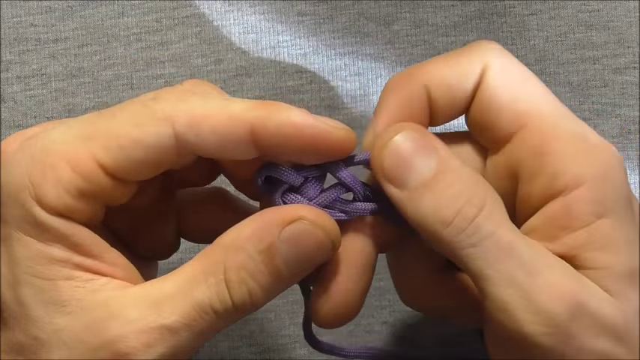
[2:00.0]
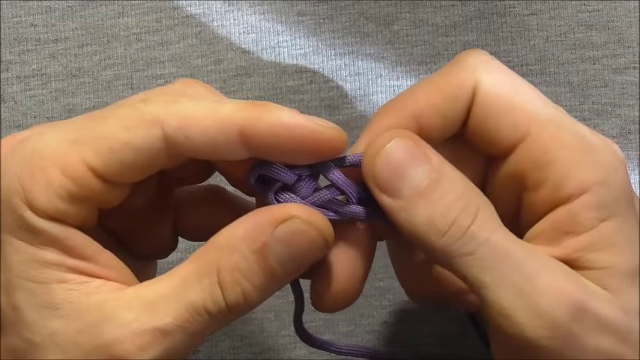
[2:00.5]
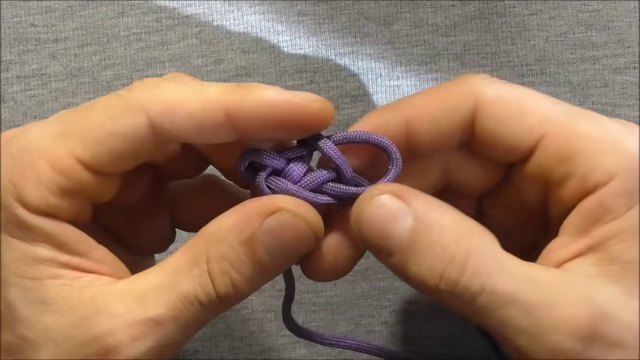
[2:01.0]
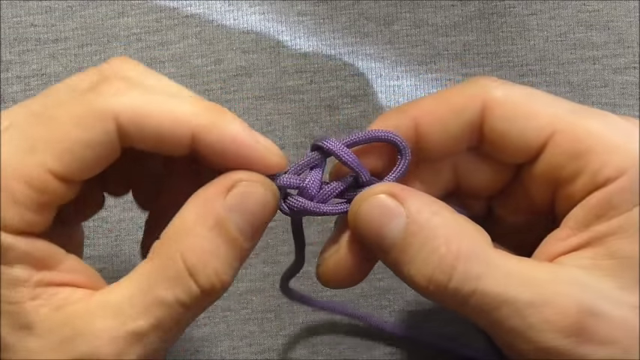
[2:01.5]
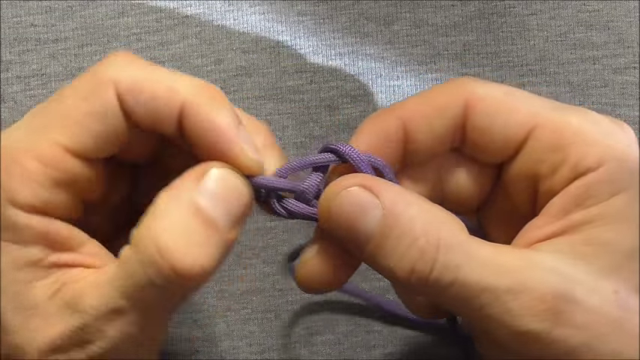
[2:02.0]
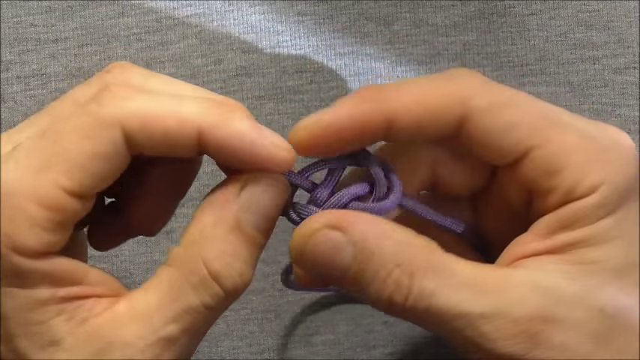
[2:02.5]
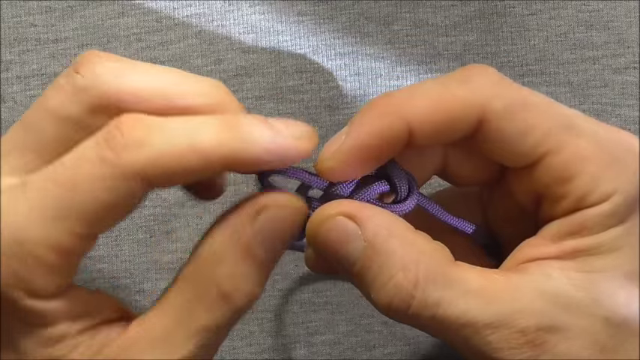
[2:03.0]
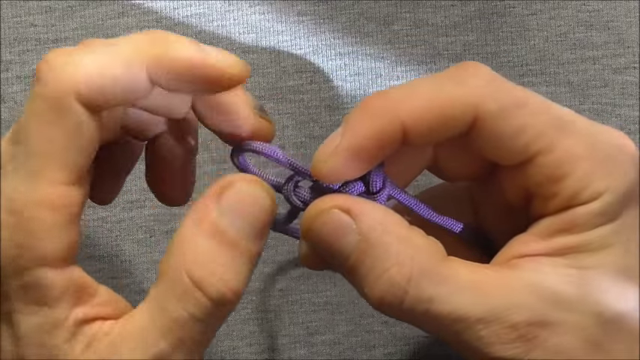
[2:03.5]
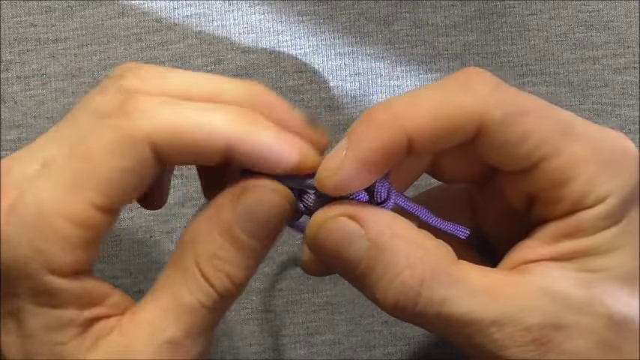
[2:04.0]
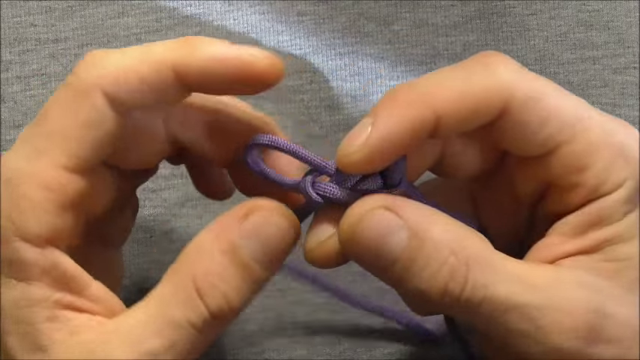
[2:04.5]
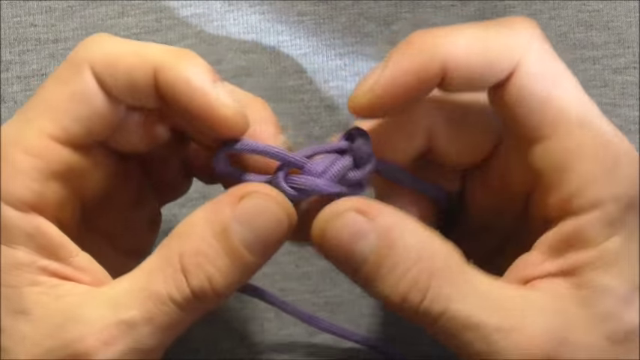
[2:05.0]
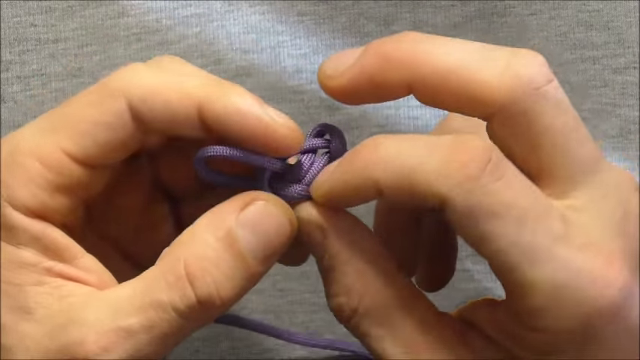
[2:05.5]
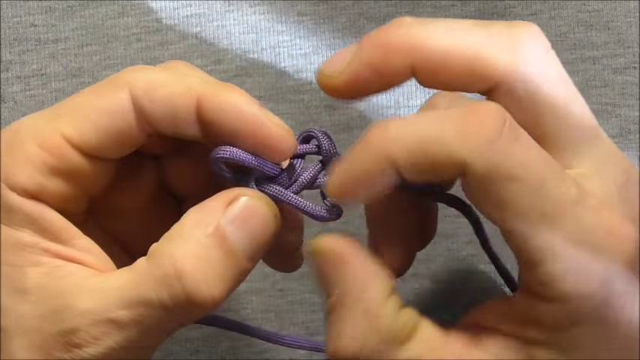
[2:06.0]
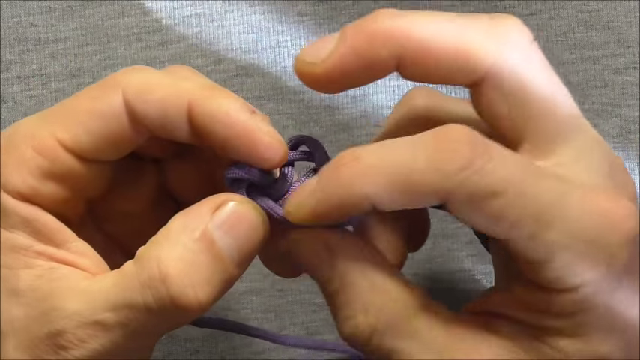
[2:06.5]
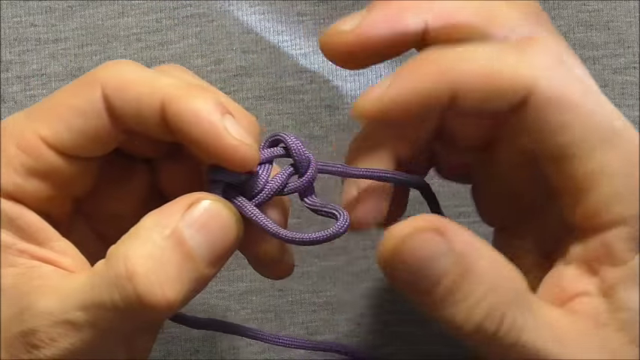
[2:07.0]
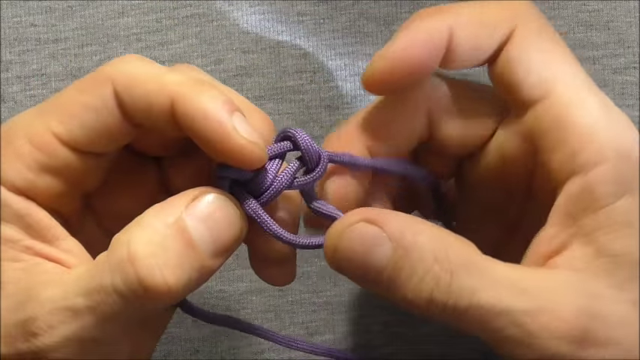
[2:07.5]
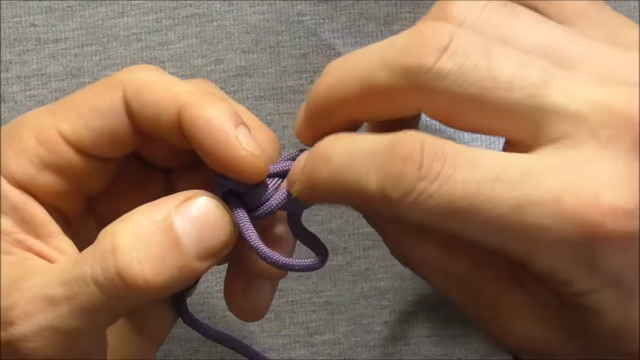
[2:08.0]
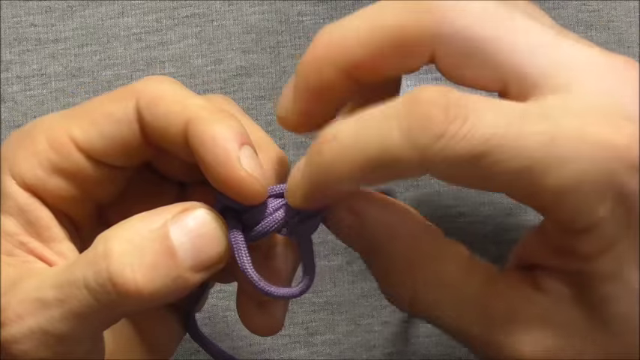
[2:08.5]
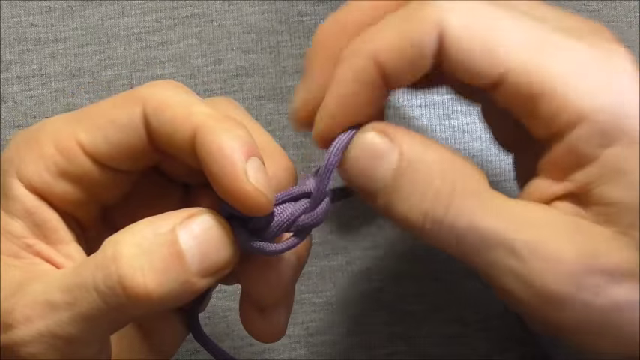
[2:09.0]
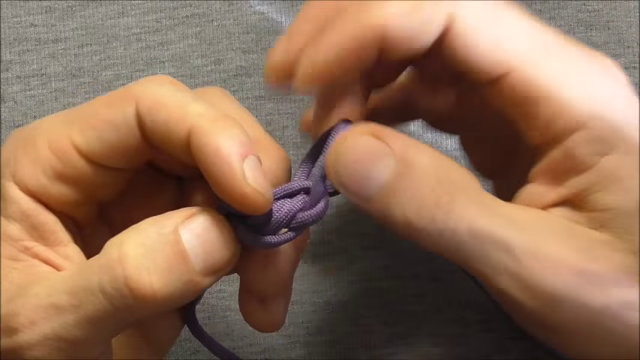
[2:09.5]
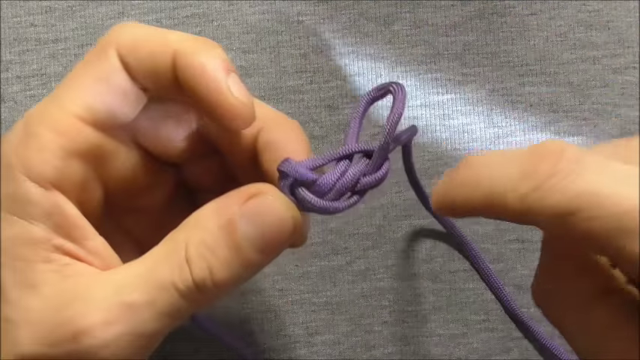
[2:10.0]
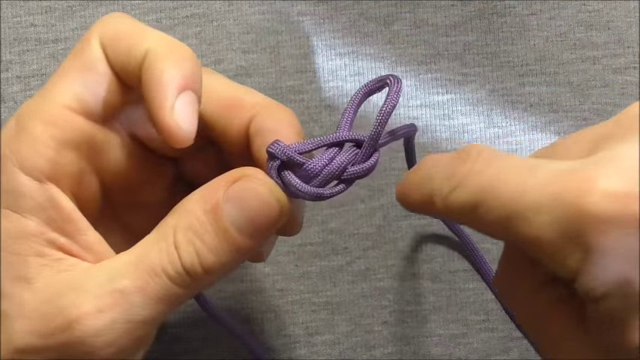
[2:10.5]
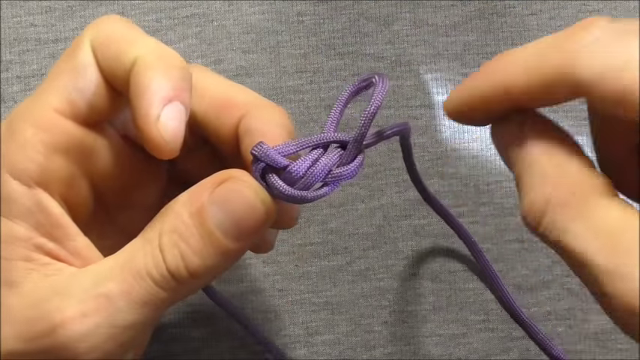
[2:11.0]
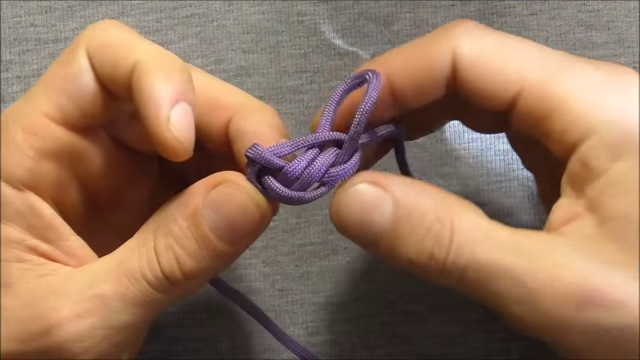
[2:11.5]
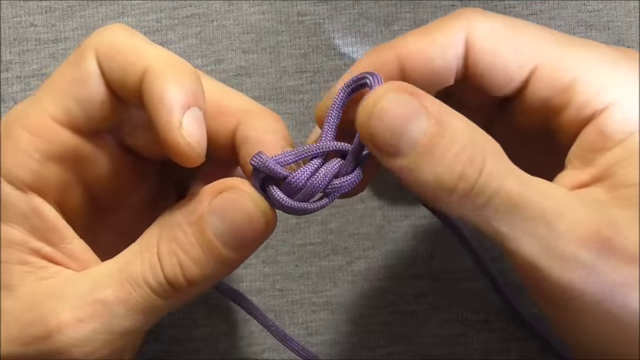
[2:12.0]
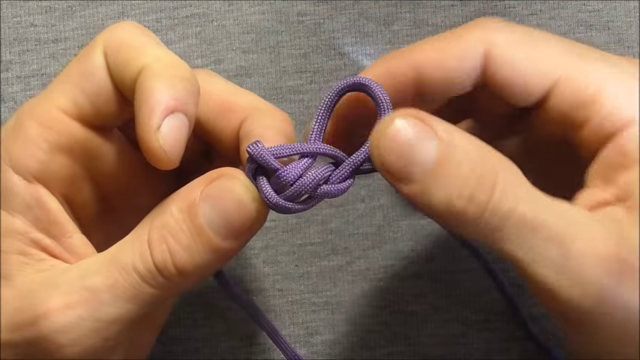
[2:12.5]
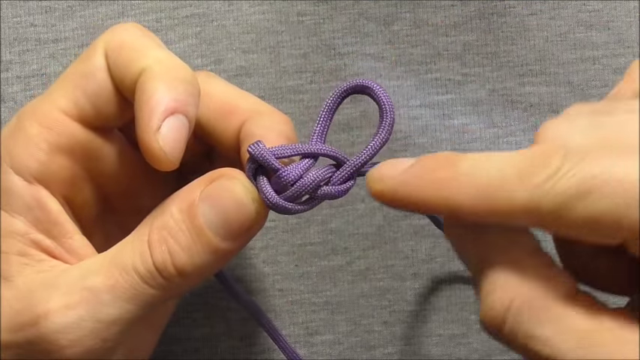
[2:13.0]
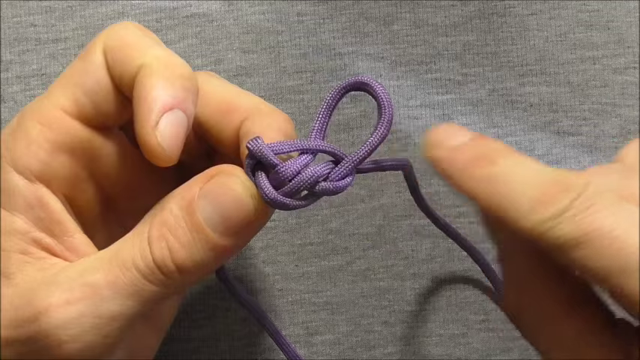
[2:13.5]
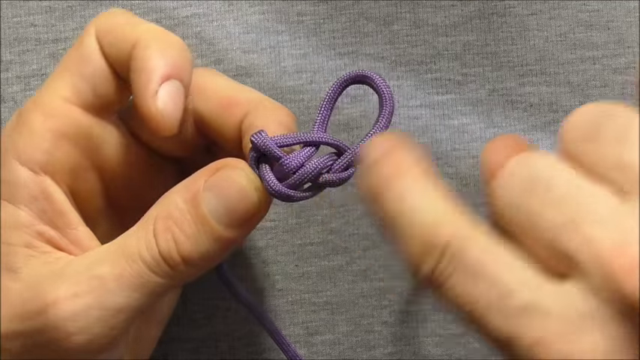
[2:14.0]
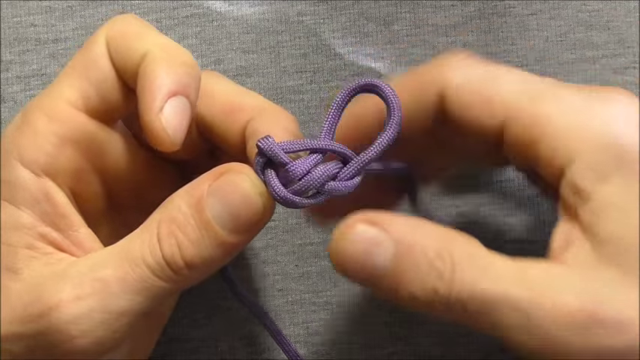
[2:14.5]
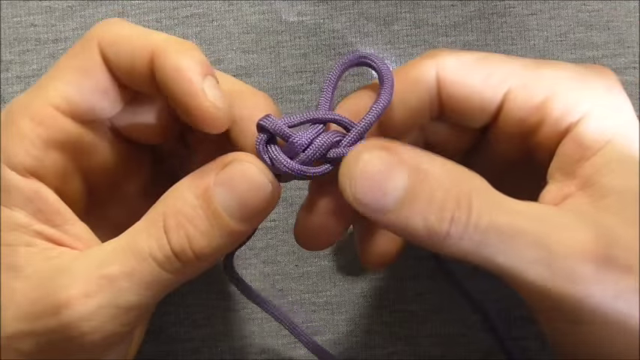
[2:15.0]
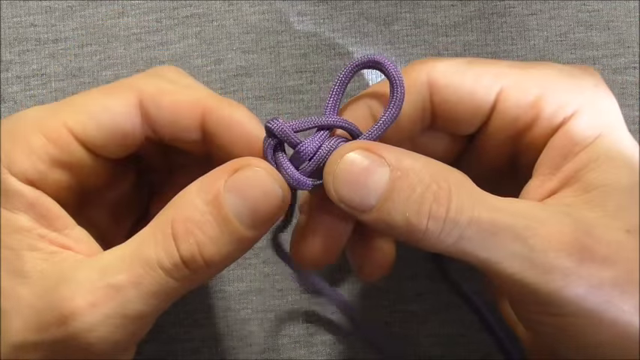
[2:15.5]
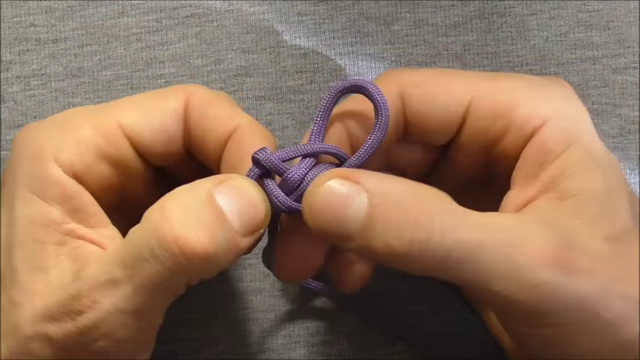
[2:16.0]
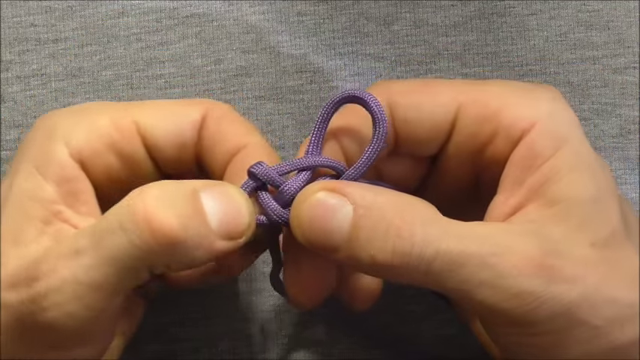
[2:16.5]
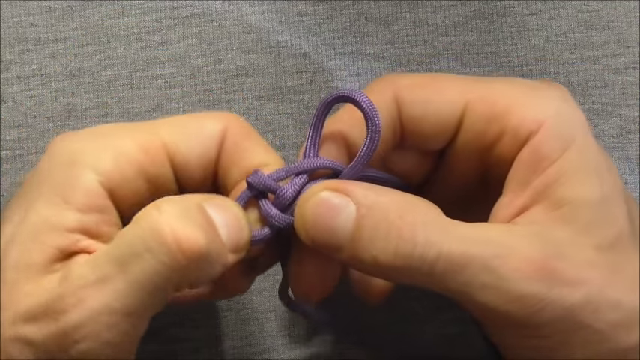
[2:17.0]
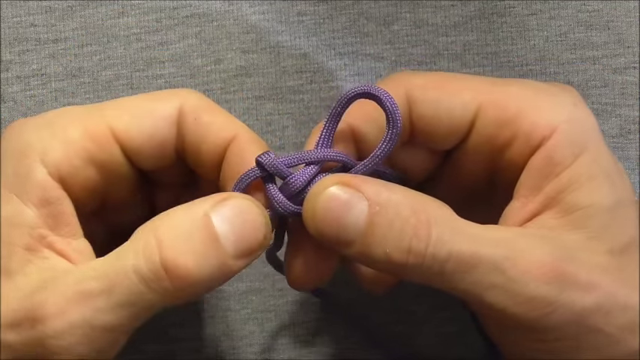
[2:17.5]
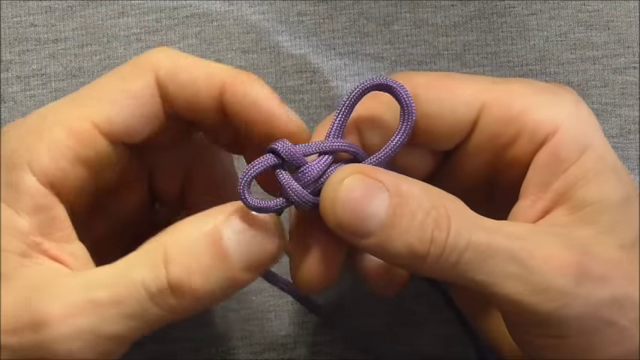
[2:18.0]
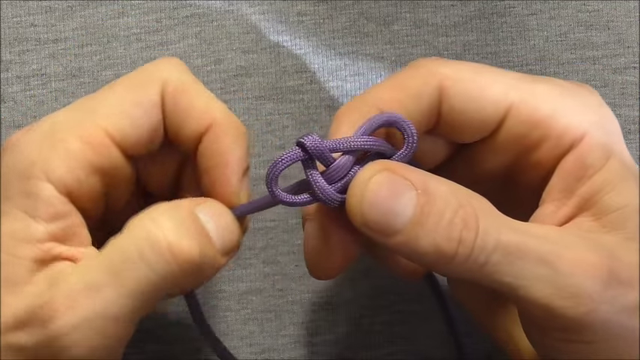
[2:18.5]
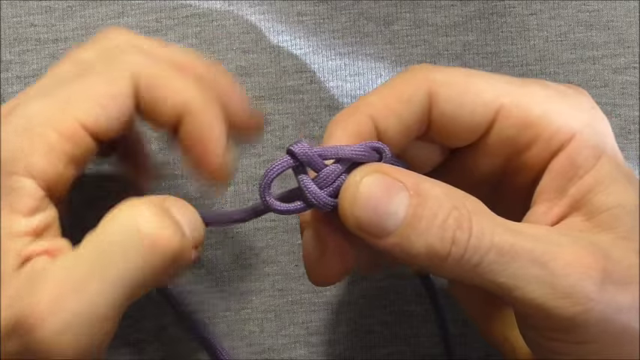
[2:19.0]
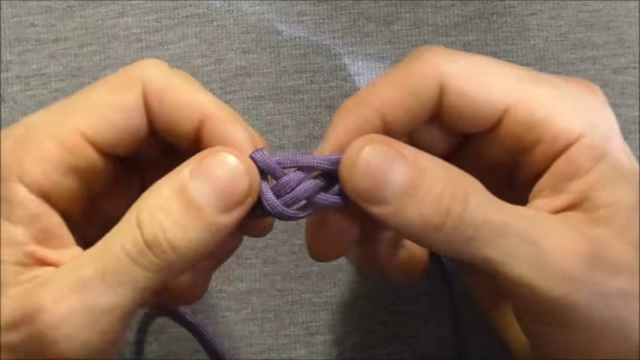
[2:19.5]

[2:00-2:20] Two hands belonging to the same person hold a complicated-looking loop that looks like it was created from a deep purple strip of fabric resembling a shoelace. The hands hold the fabric against a backdrop that looks like a gray woven fabric on a flat surface. The shadows of the hands are visible as they work on the loop. The left index finger and thumb pull on the loop, and then the right index finger and thumb pull the loop. The right index finger touches the loop as if trying to demonstrate something. The left fingers pull, and the hands appear to be adjusting the loop to make it tighter and more compact. The entire loop resembles a spider web structure. The hands continue to work on the loop. The hands have neatly manicured nails.